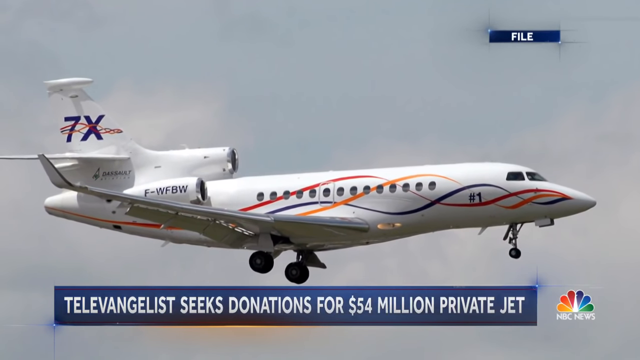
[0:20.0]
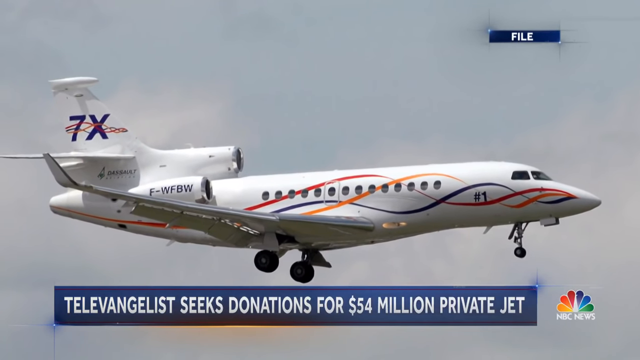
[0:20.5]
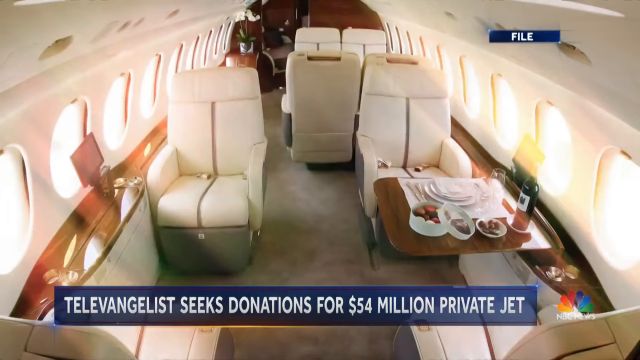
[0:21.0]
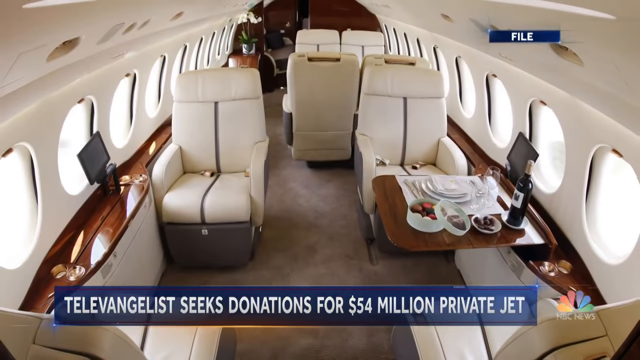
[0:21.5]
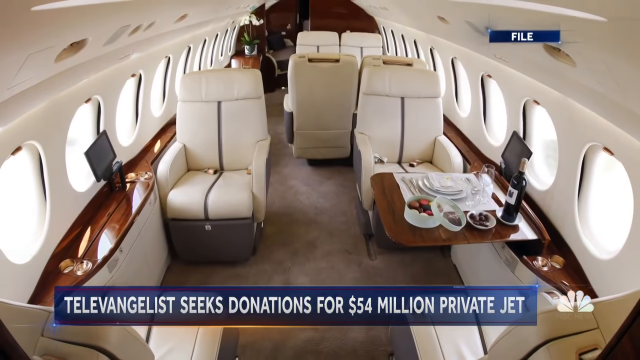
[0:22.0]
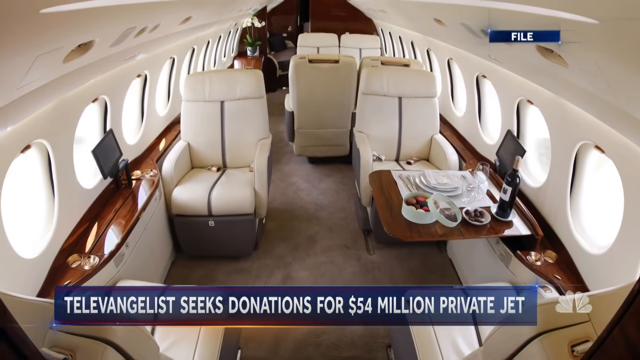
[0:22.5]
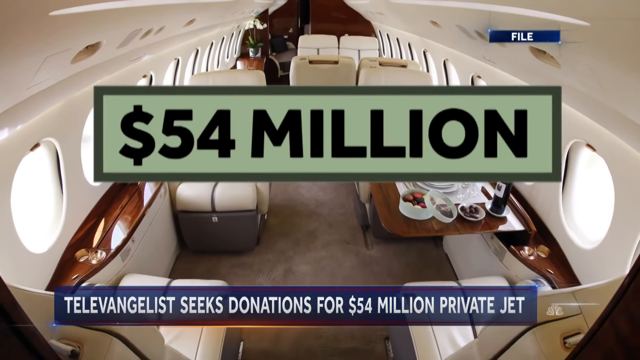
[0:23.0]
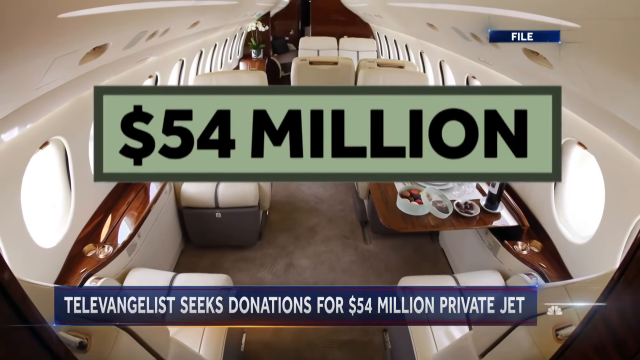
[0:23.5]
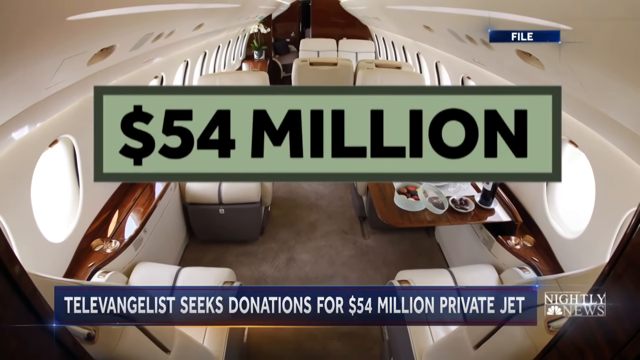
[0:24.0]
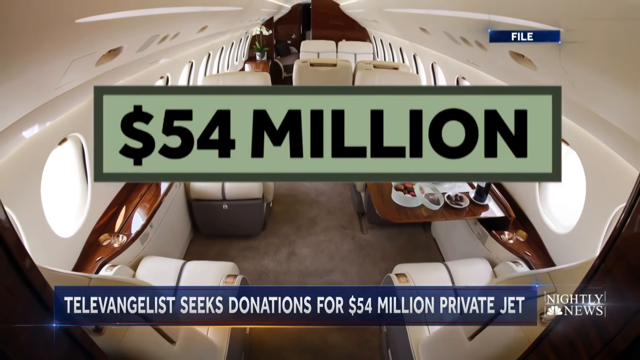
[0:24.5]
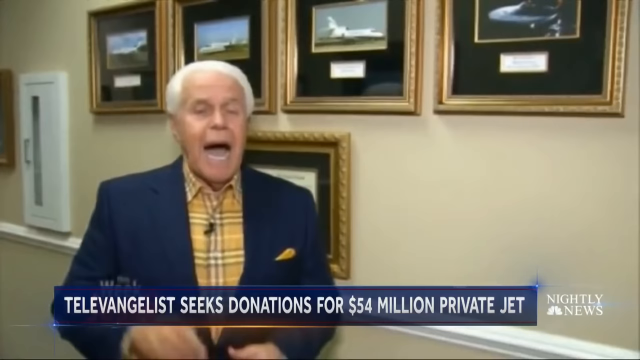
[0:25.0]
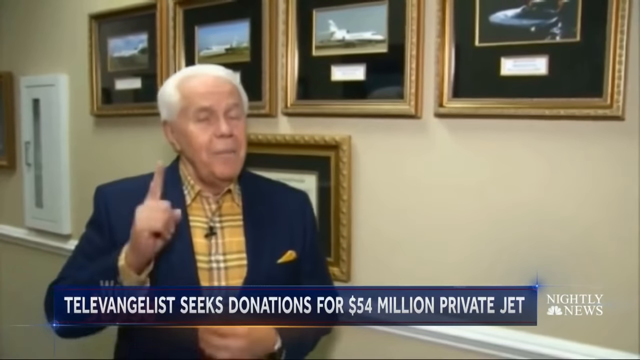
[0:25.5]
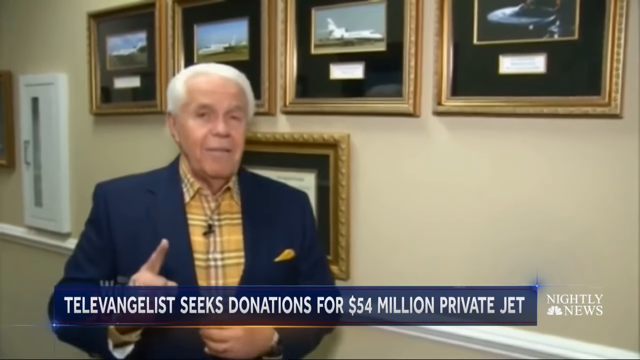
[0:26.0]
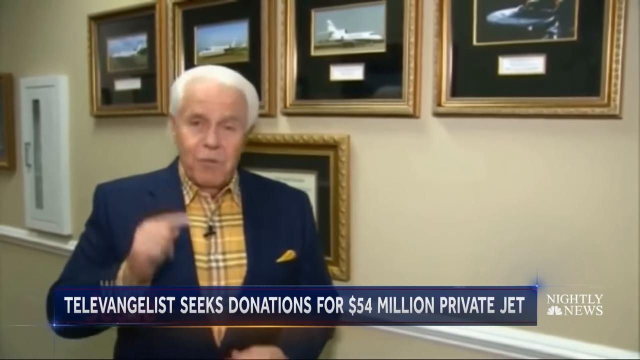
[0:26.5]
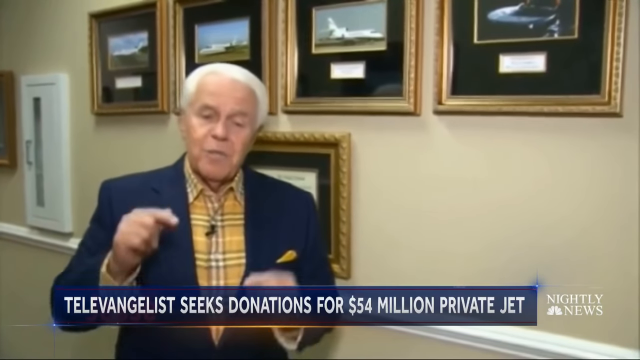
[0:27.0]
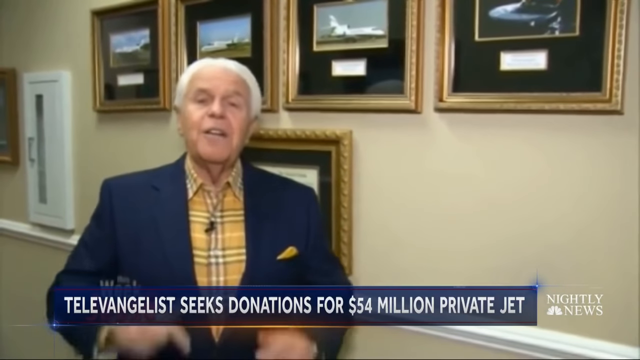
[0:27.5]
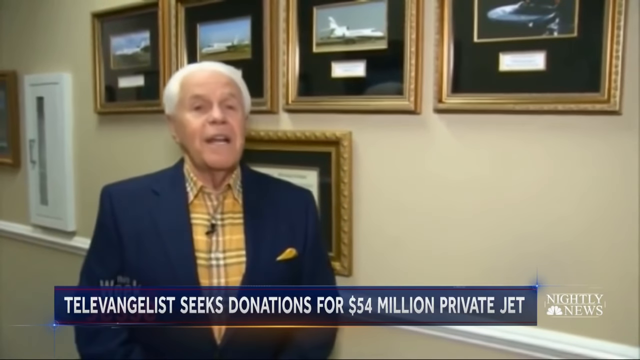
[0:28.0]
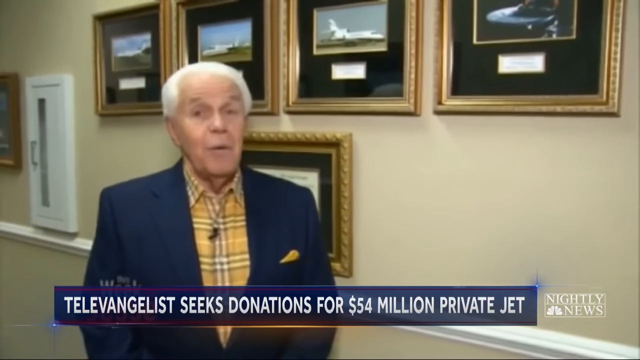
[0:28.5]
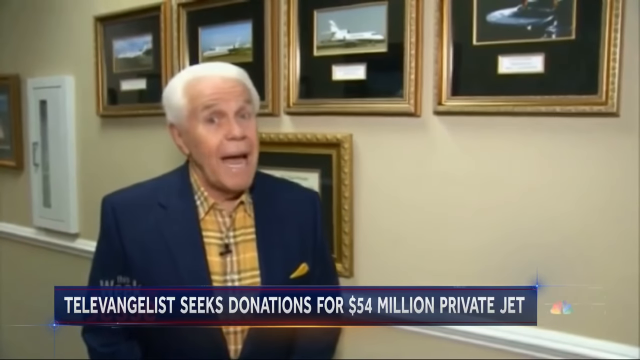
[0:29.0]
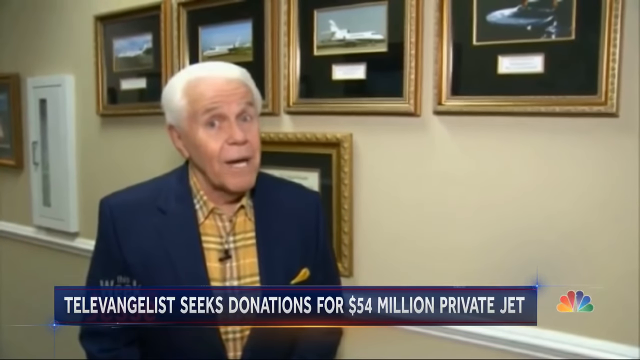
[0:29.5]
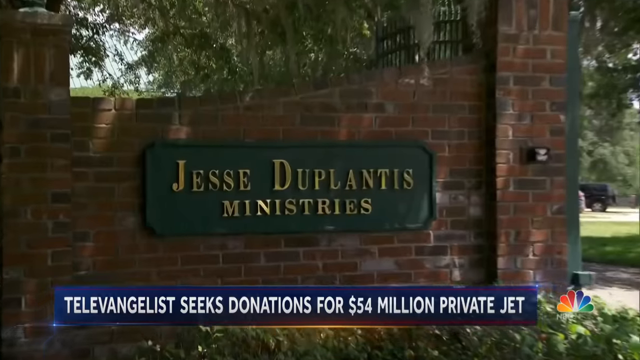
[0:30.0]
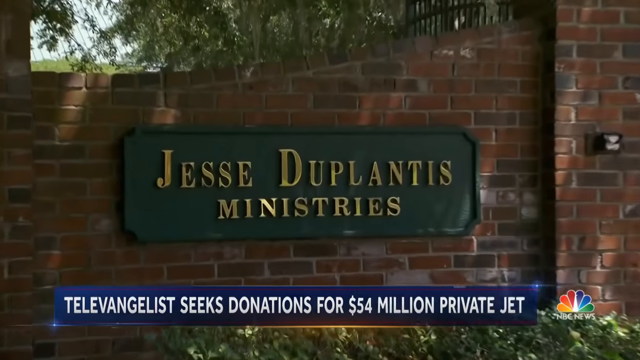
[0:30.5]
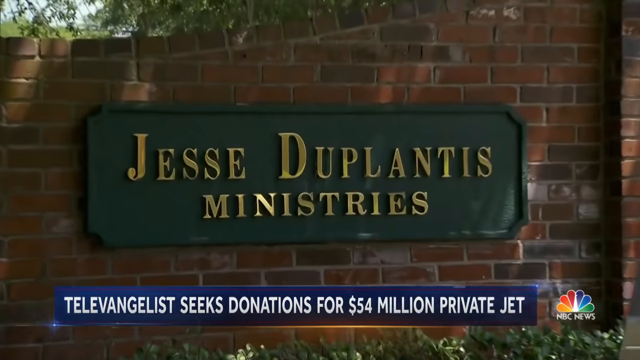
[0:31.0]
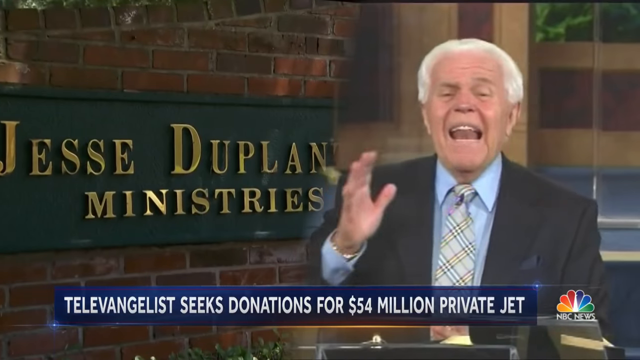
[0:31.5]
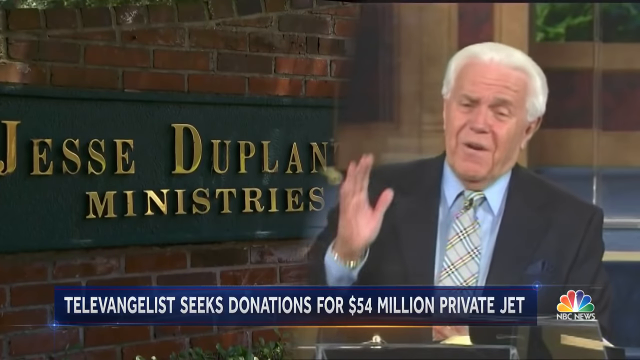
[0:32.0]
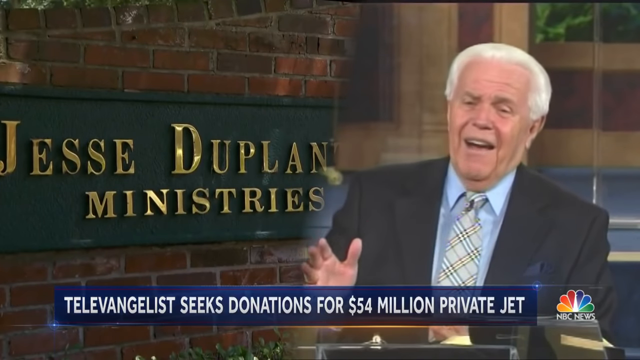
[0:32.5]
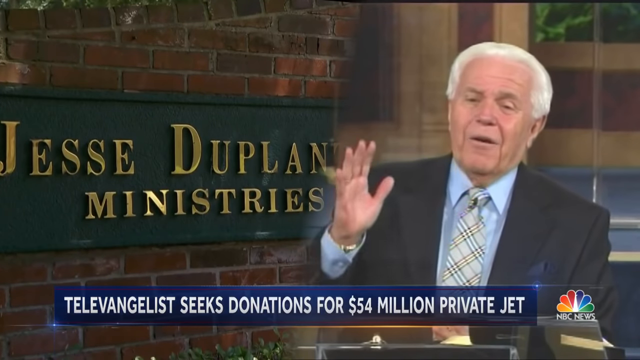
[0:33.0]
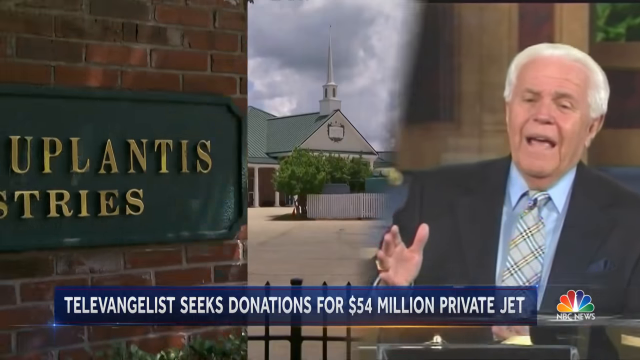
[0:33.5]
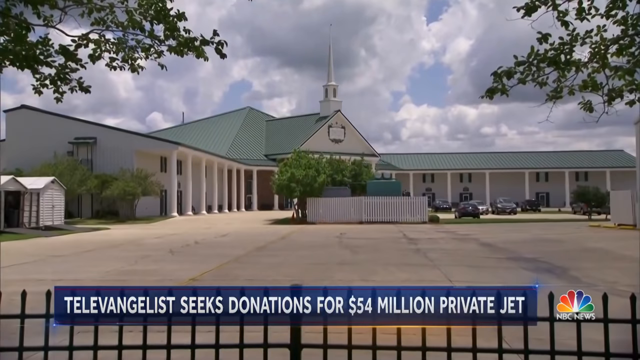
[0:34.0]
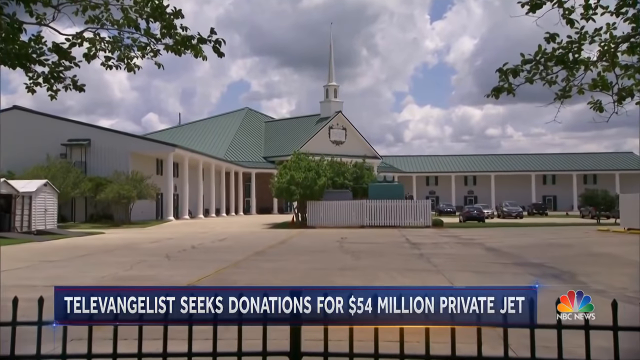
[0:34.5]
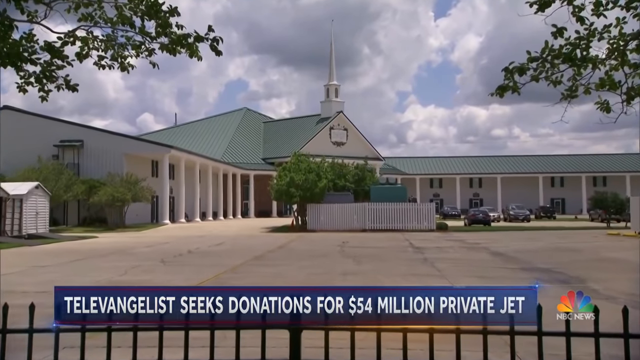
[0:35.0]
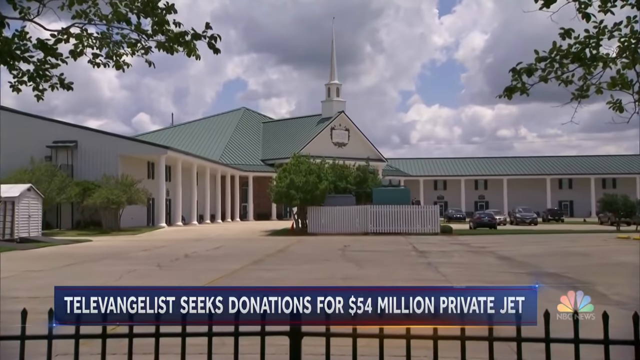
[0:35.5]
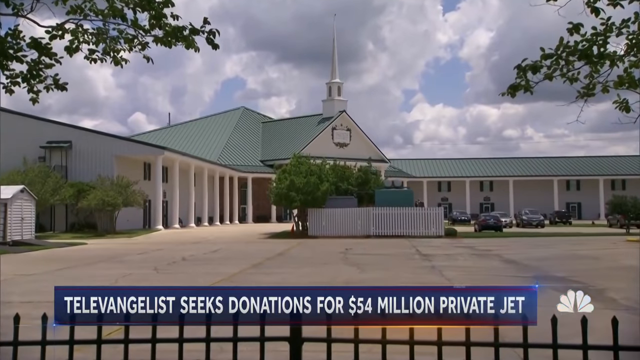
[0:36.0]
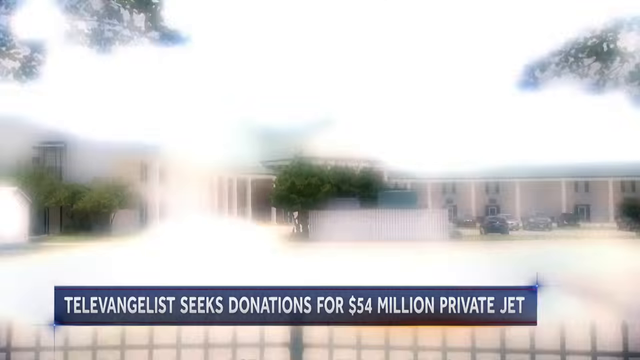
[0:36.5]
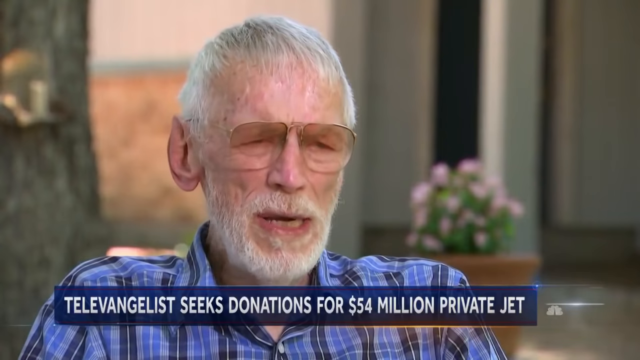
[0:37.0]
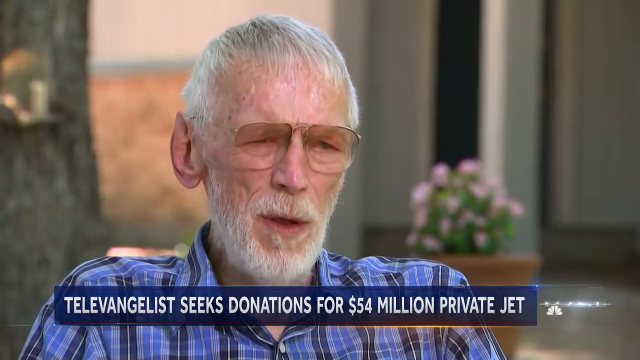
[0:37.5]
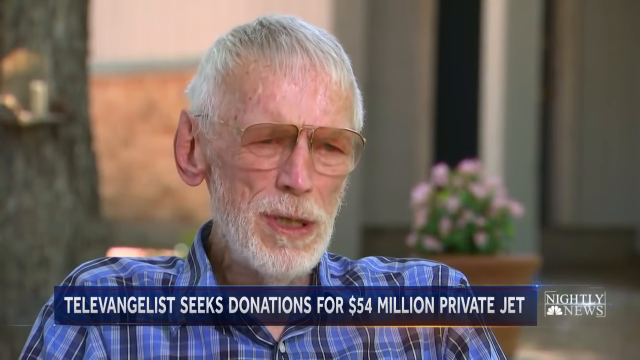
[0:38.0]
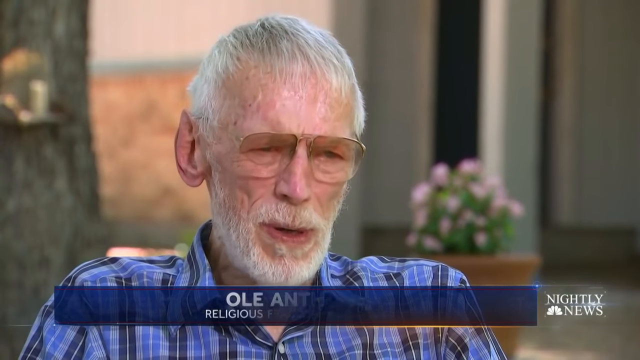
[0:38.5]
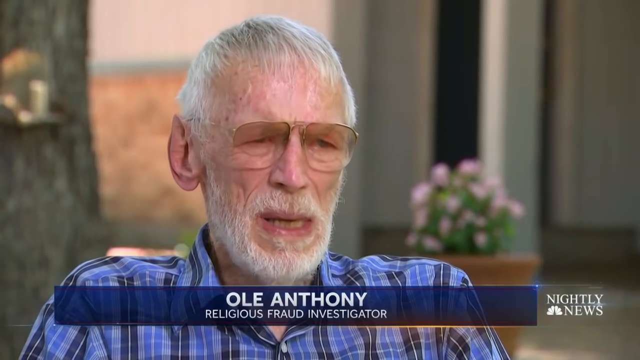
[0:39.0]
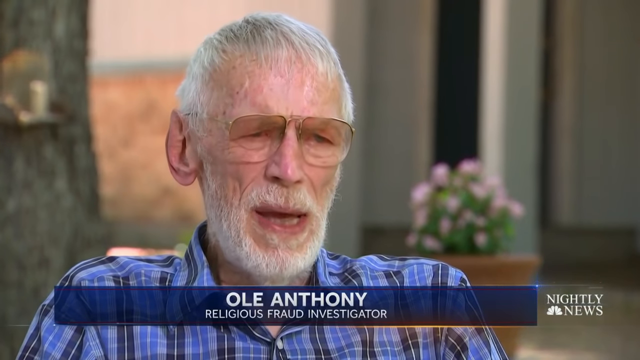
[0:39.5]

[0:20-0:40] A jet is shown flying, followed by its interior, which appears large and lavish. A big sign comes across the top reading "54 million." The video flashes to the man standing in the hallway talking. "Jesse Duplant Ministries" is on a sign against a brick wall. A church is shown, and then another person, a religious fraud investigator named Ole Anthony, is interviewed. He is an older, somewhat thin man with white hair and glasses, and he is not happy. The video keeps going back to pictures of the inside of the private jet, which looks very fancy, and to the "54 million" sign.